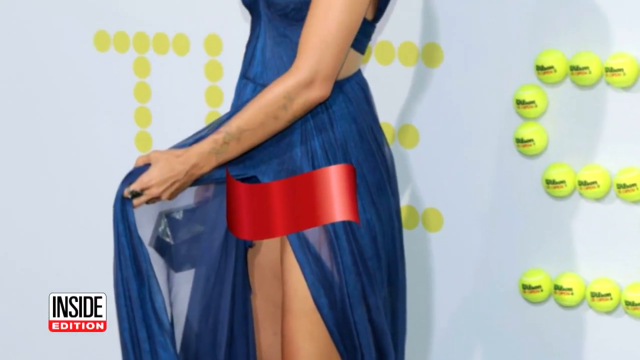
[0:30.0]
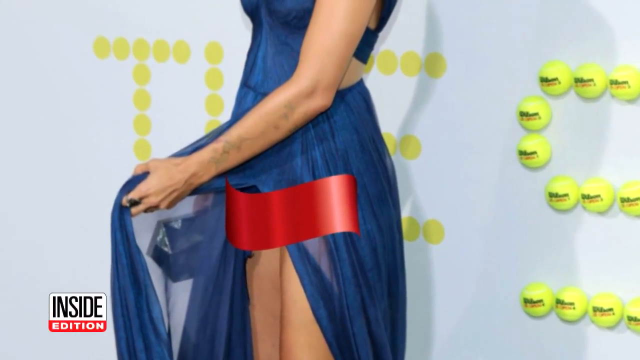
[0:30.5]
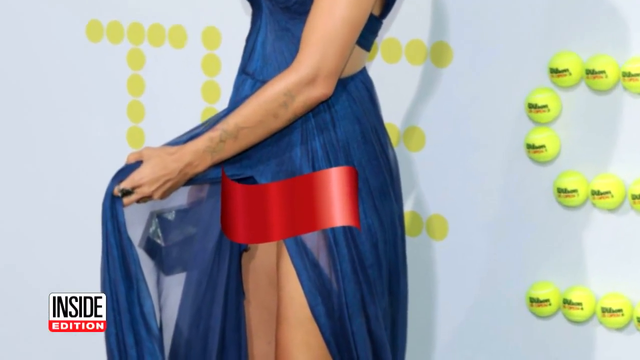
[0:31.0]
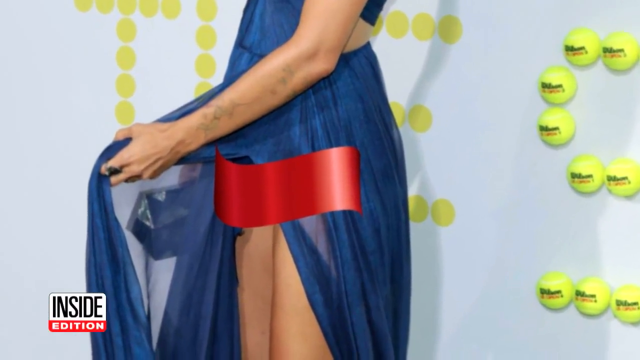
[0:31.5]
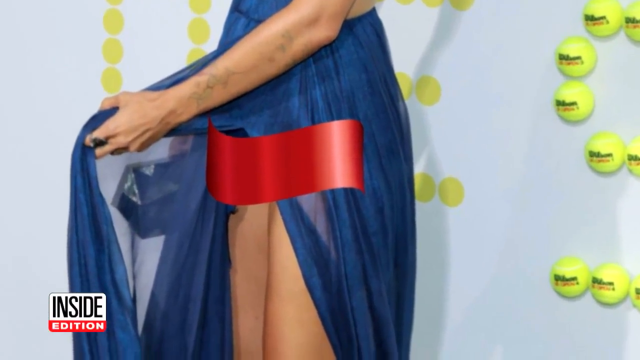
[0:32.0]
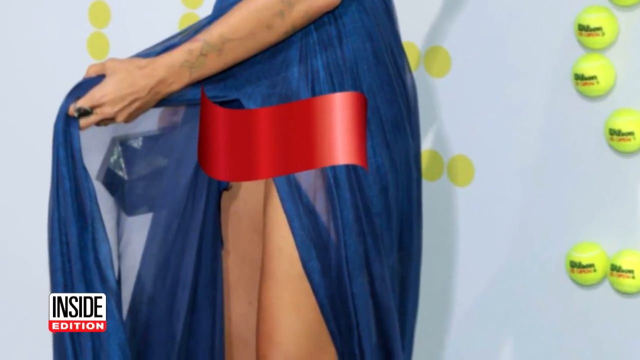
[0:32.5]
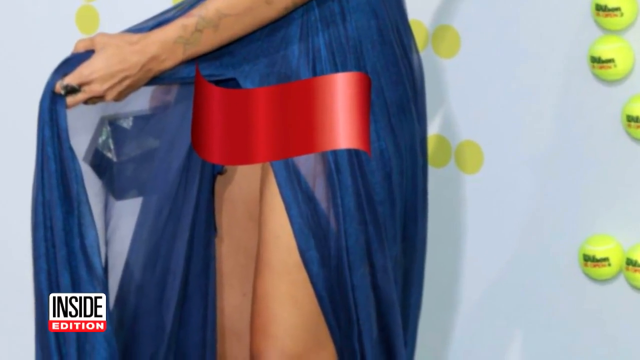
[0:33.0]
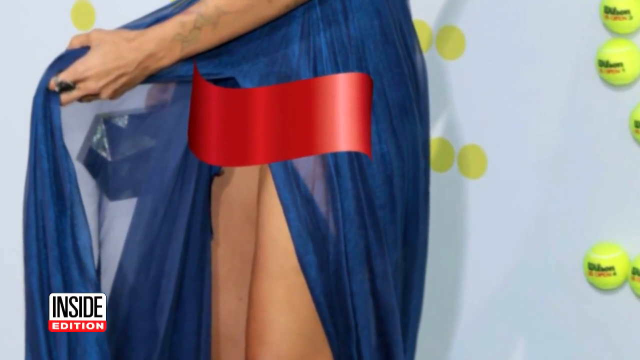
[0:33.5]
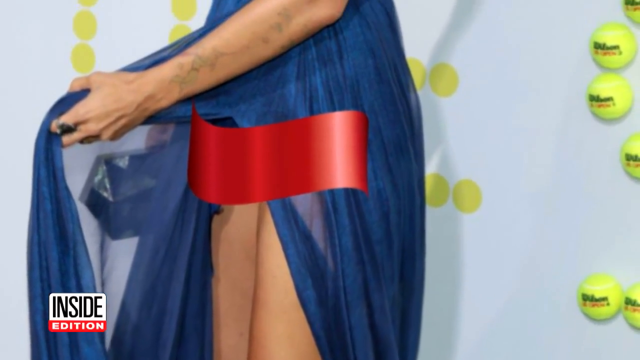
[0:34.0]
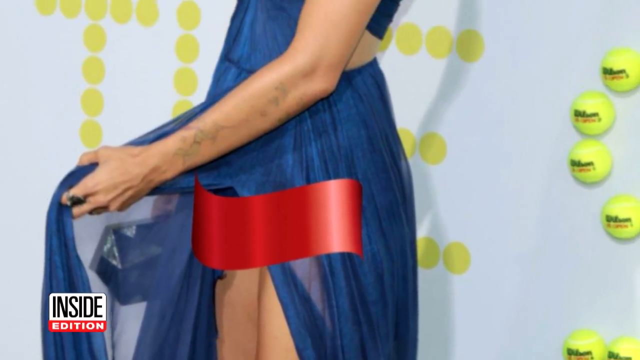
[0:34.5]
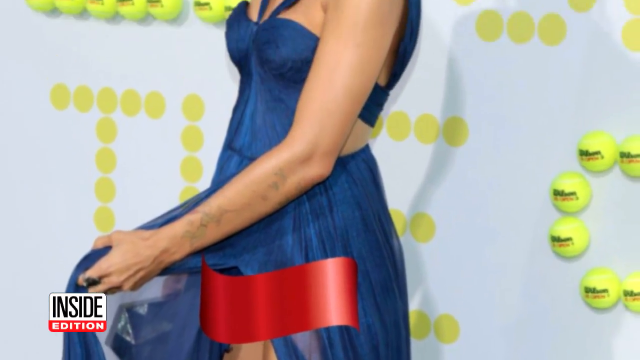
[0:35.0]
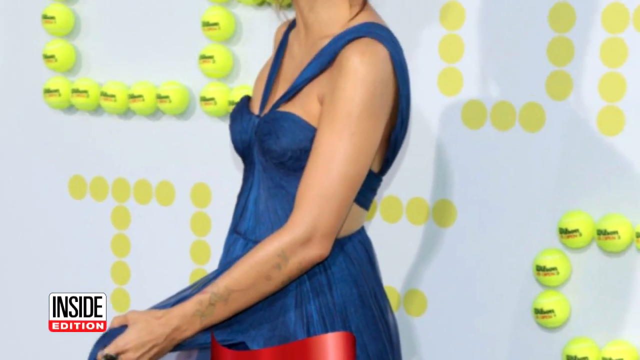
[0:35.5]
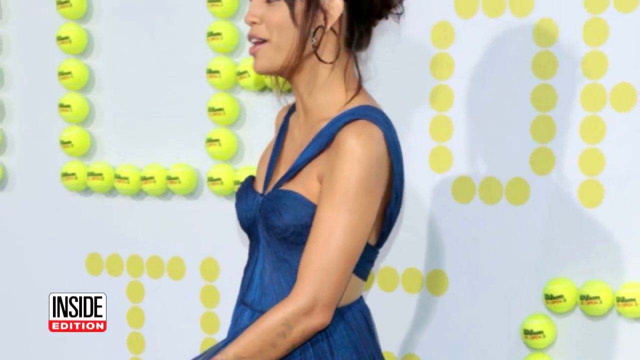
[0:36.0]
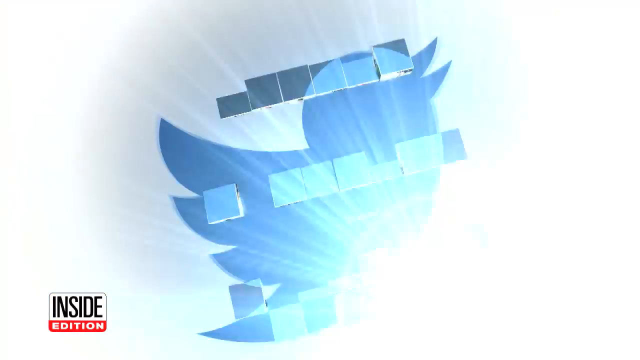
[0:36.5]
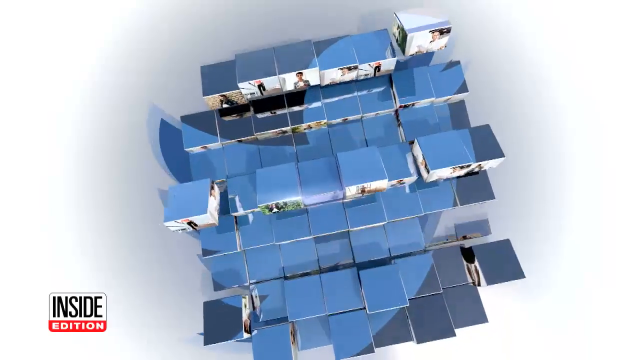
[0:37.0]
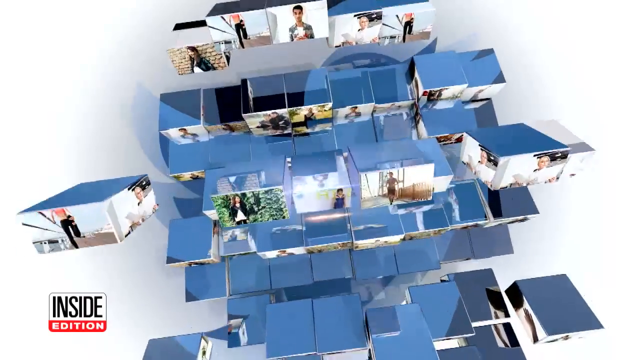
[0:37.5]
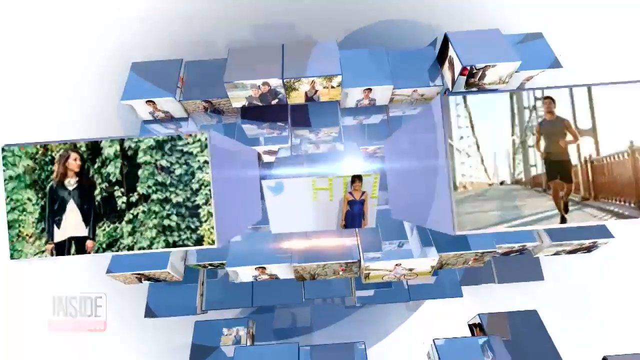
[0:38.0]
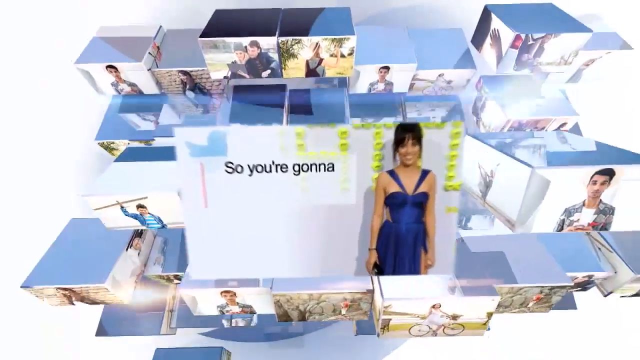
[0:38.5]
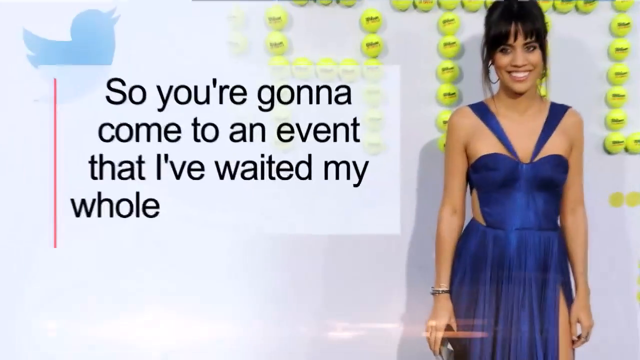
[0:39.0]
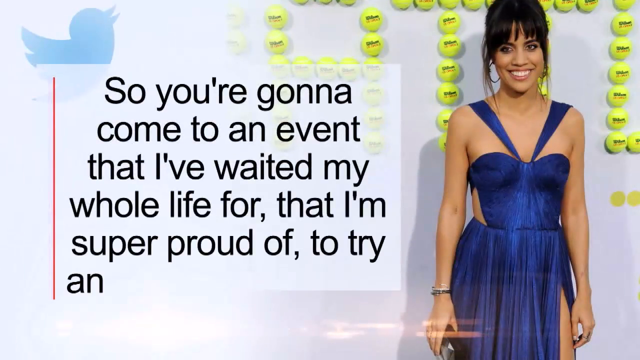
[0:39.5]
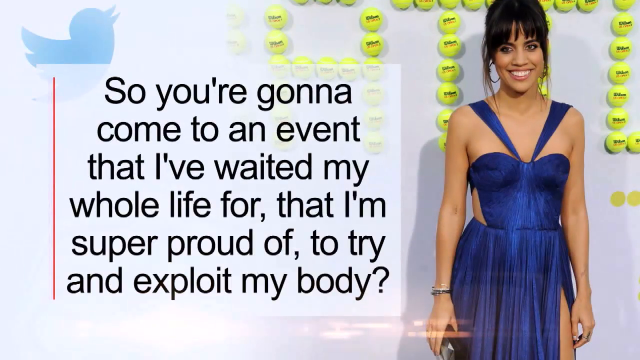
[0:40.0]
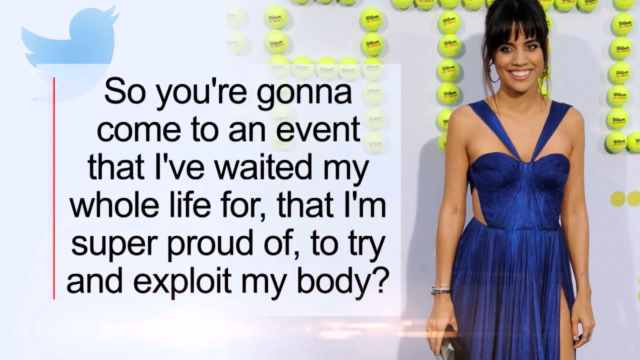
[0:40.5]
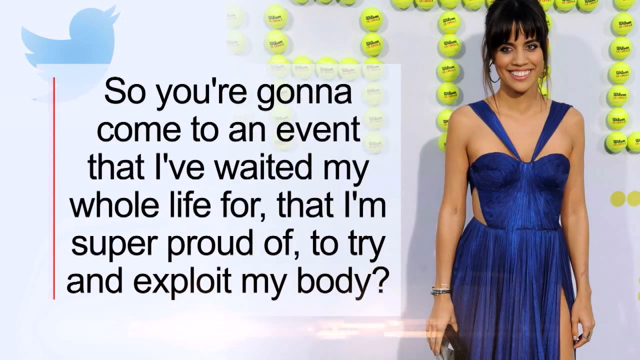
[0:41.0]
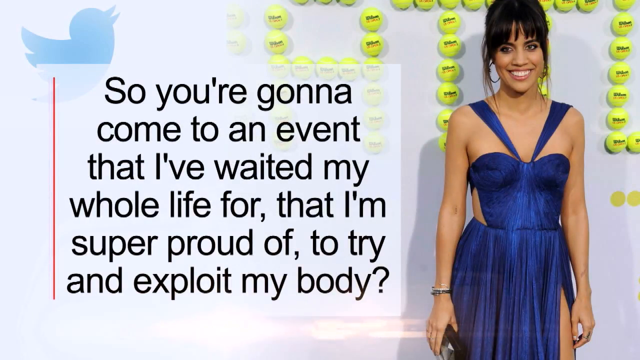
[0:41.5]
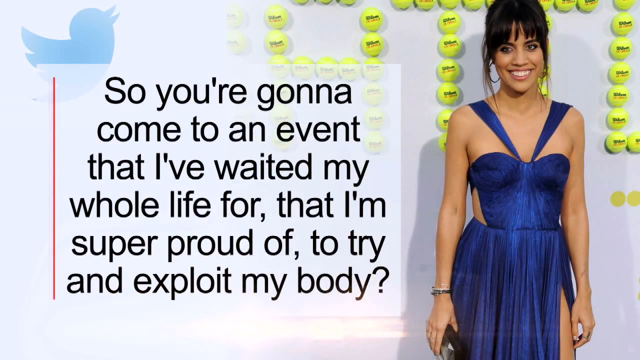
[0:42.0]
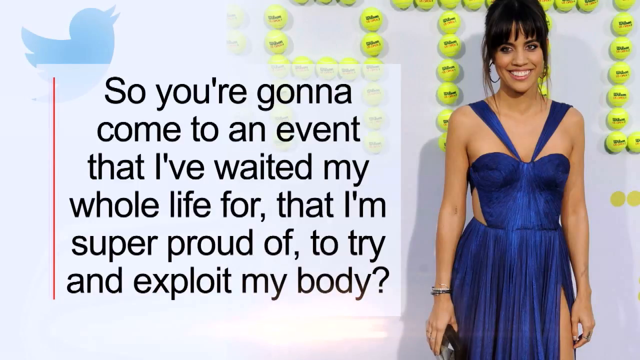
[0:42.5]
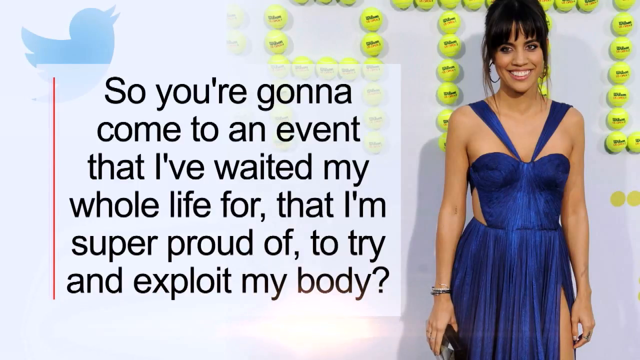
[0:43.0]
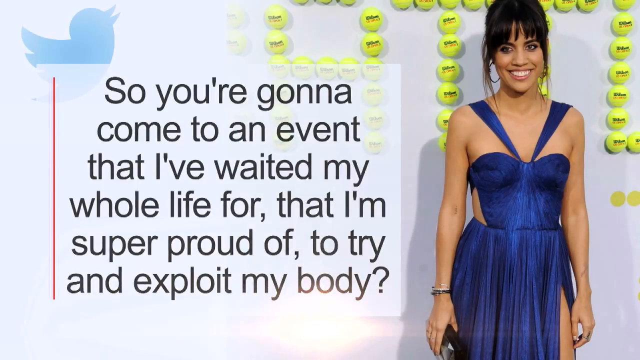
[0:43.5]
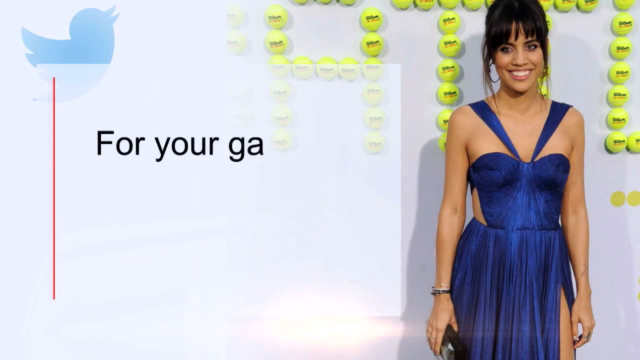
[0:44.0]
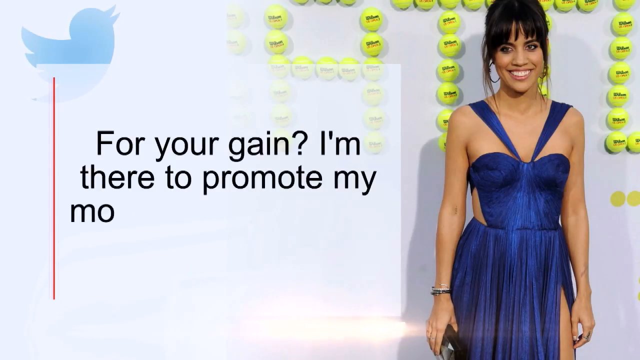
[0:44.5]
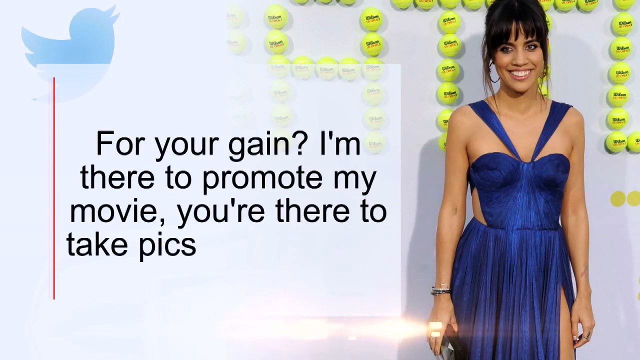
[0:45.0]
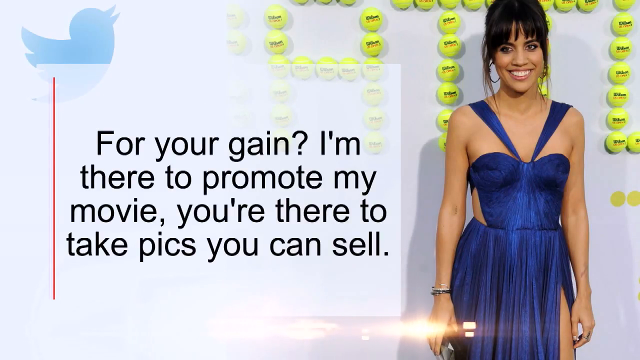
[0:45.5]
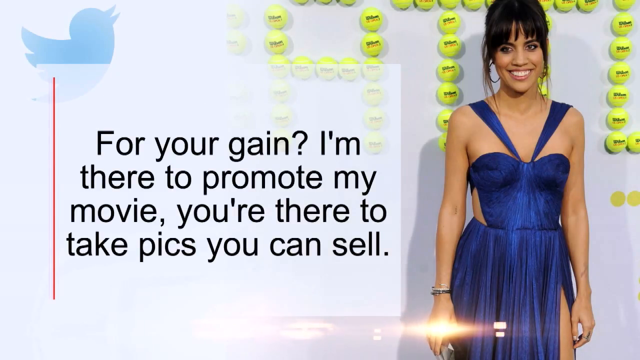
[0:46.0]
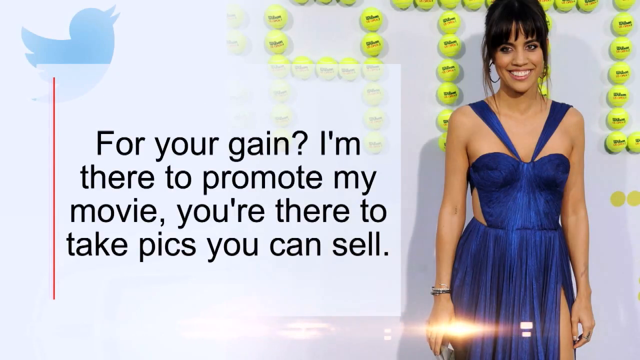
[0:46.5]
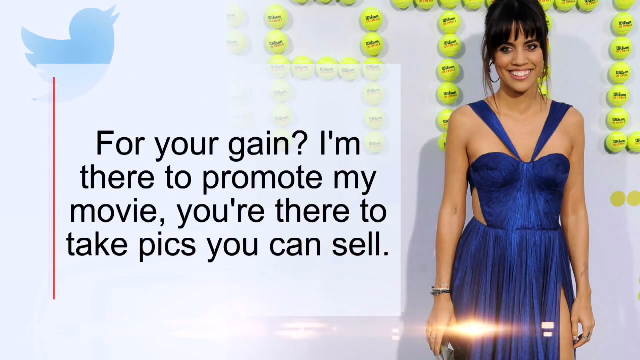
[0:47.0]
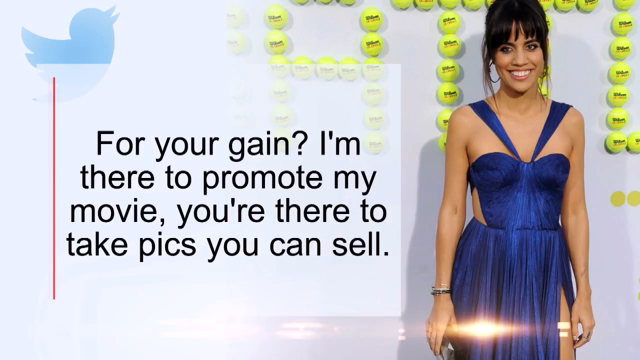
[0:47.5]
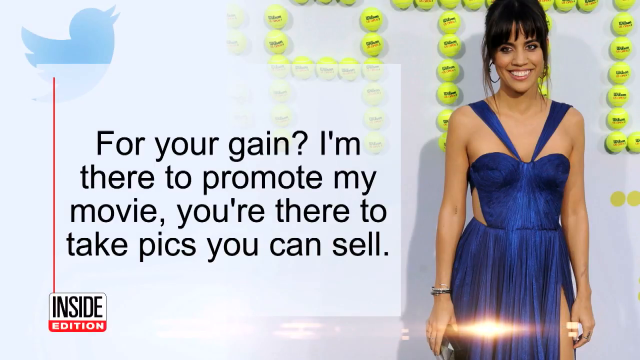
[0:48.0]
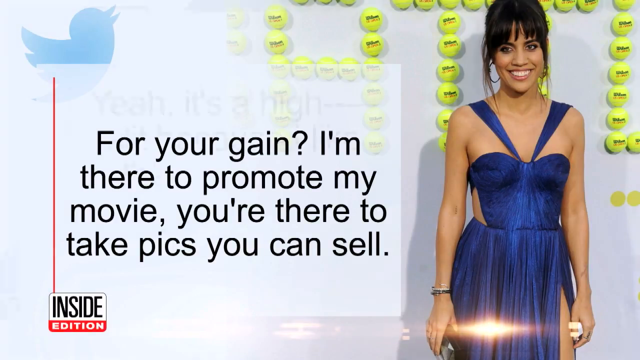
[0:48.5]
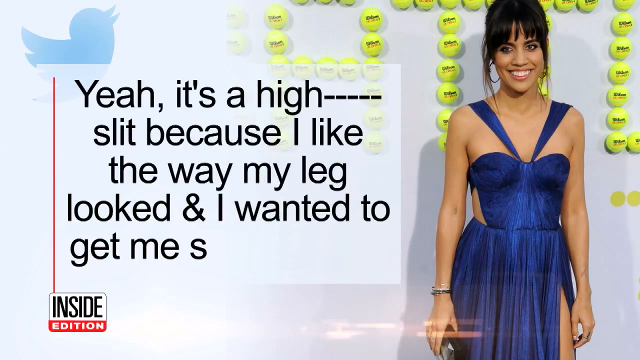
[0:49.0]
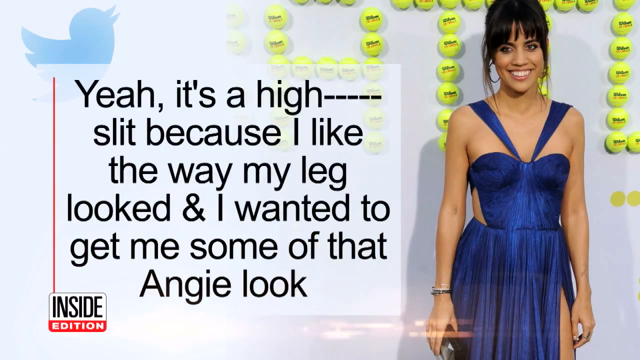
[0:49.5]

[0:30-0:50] The camera zooms in further on the woman as she is photographed, standing by the banner with bold capital yellow letters that reads "Battle of the Sexes." A tweet appears: "so you are going to come to an event that I've waited my whole life for, that I'm super proud of, to try and exploit my body," followed by "for your gain, I'm there to promote my movie, you are there to take pics, you can sell." Further text says "because i like the way my leg looked and i wanted to get me some of the edgy look." As the camera zooms in on her, a tattoo is visible on her left hand. She appears to be in her early 20s.